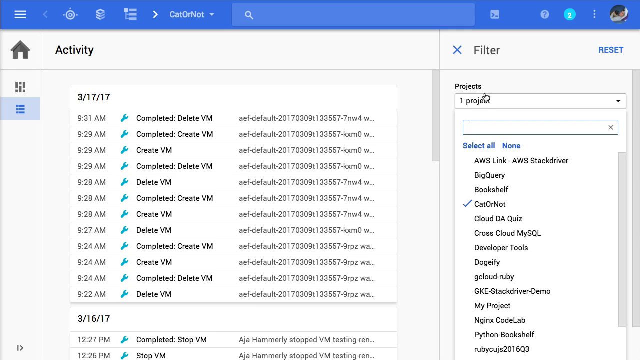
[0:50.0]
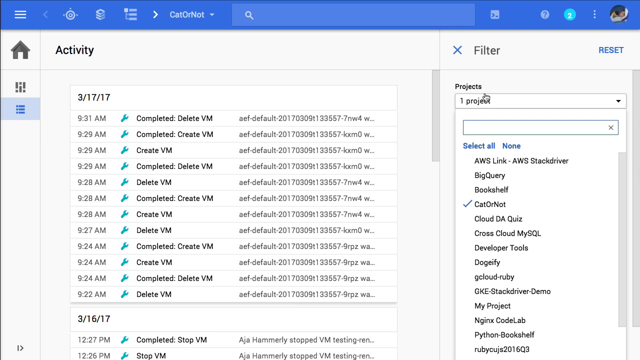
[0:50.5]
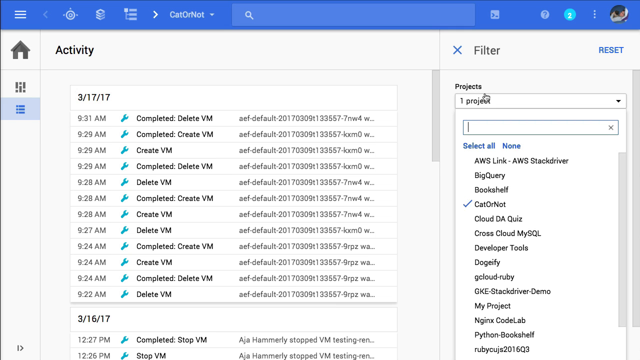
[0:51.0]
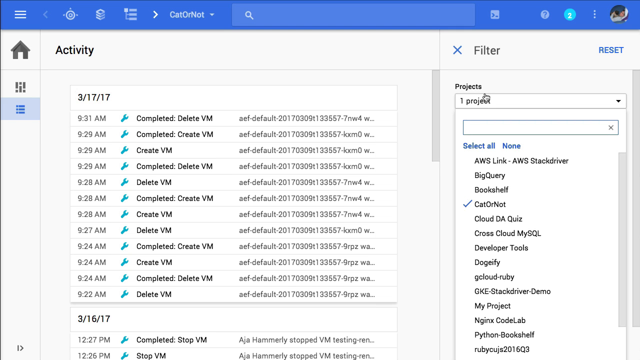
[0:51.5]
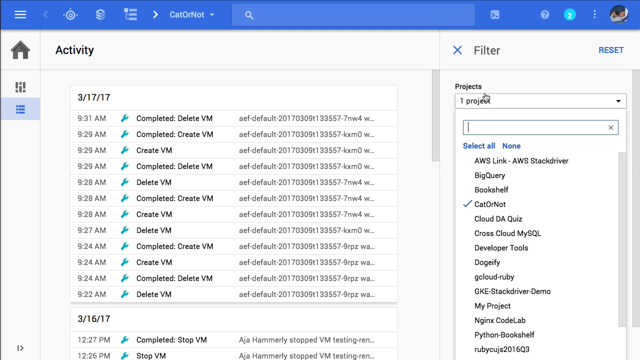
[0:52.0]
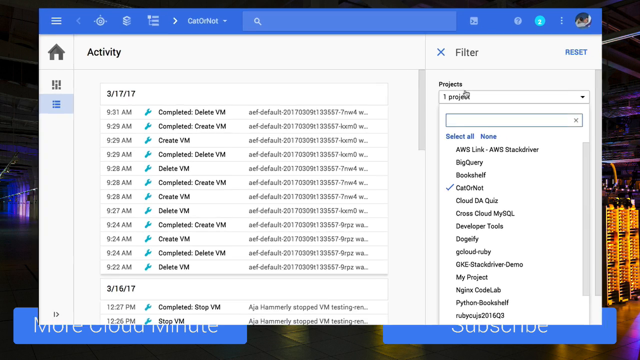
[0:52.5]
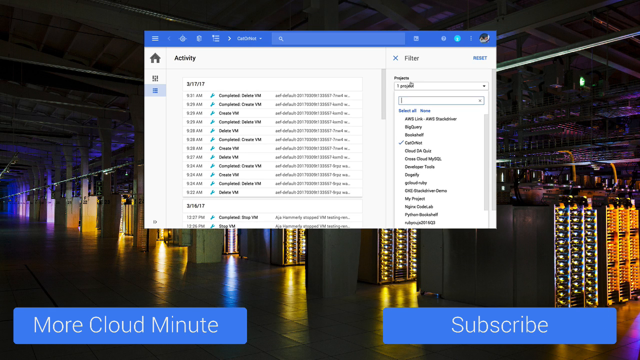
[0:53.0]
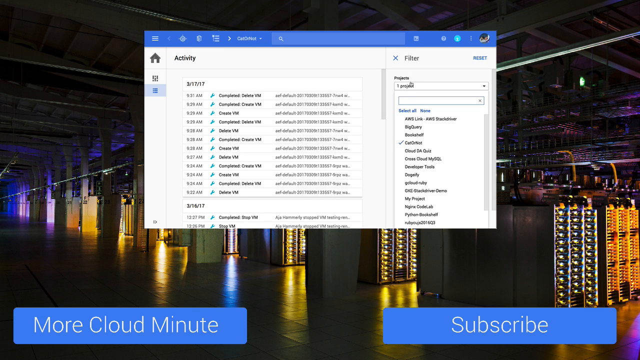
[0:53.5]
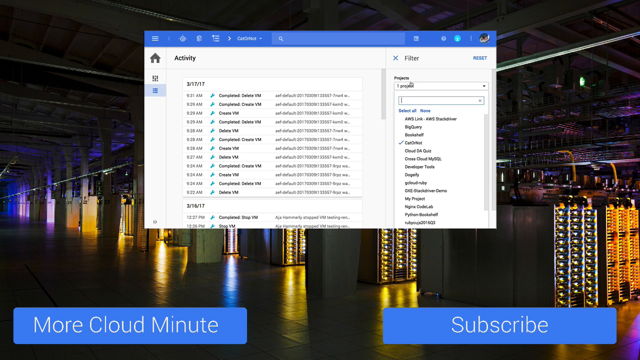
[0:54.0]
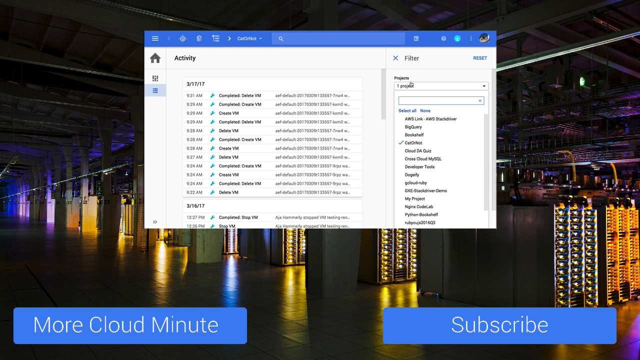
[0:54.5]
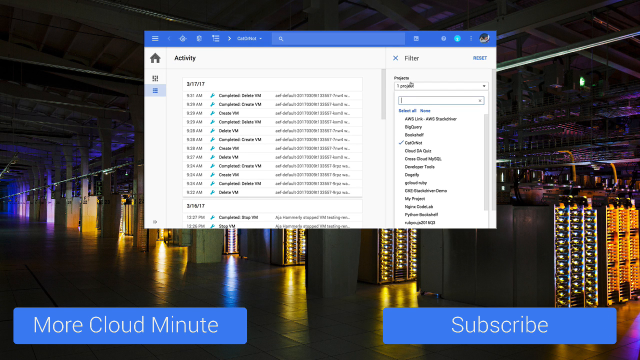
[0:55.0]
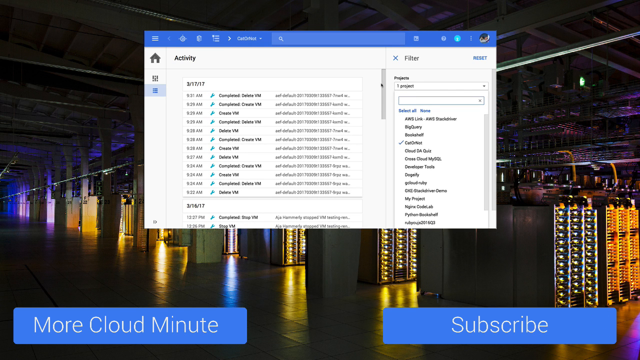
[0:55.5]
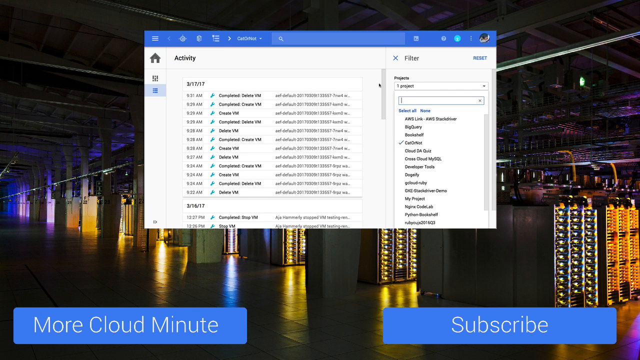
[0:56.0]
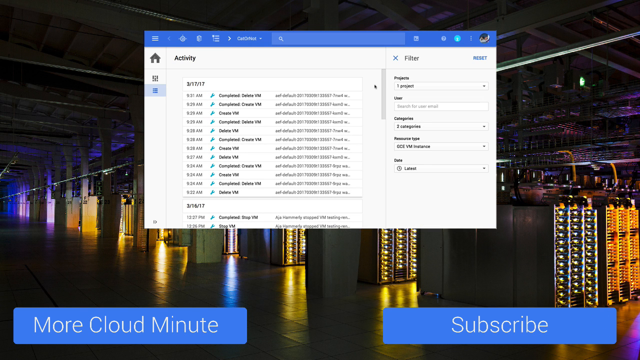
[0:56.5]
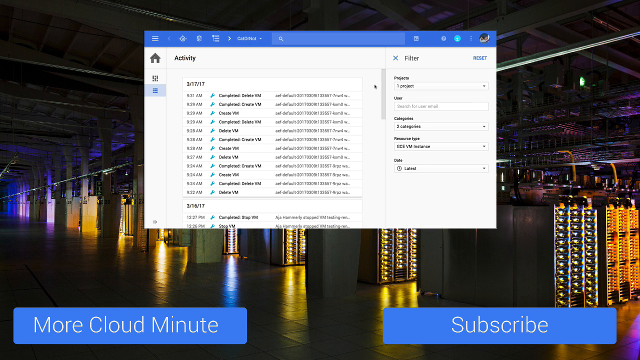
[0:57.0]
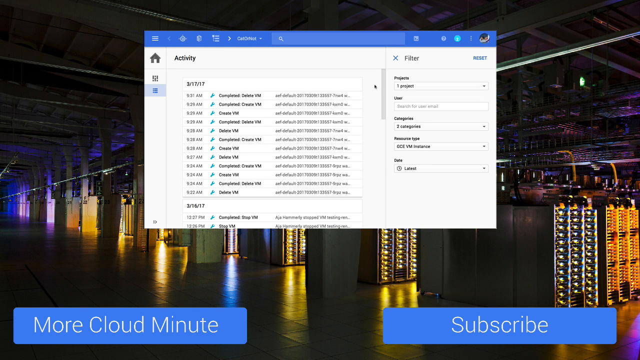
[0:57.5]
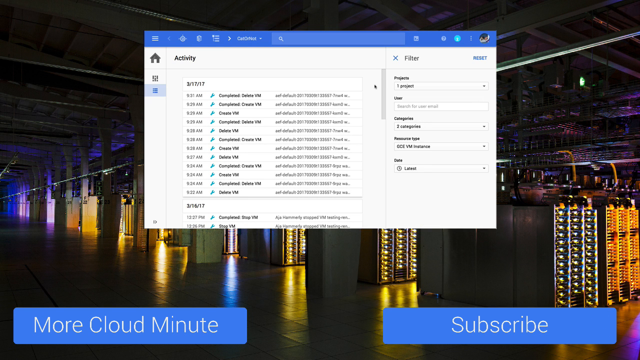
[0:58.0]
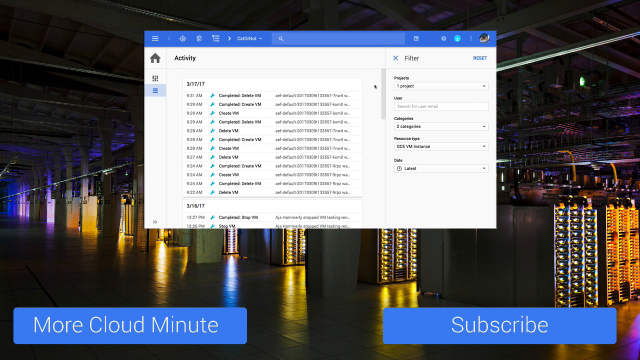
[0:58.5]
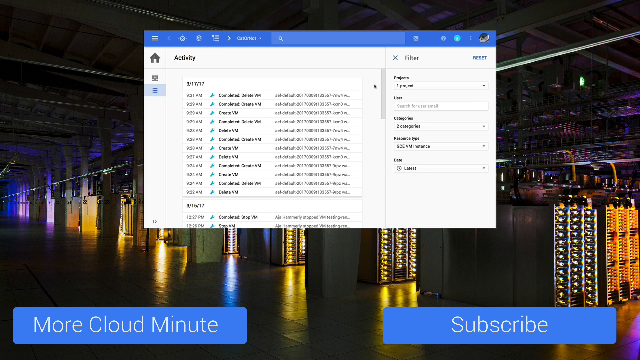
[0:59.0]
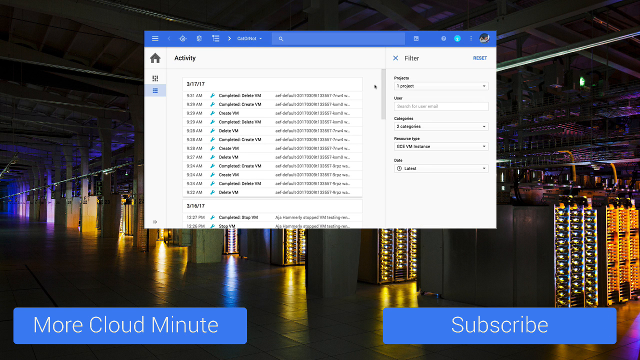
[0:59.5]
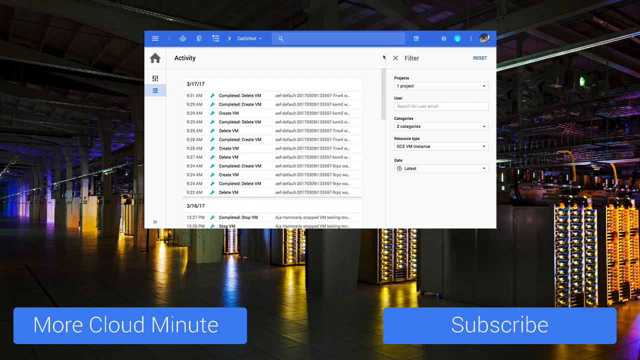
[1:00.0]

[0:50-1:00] The platform apparently allows the screen to be minimized while it is in use, and there are options to subscribe and to log in.